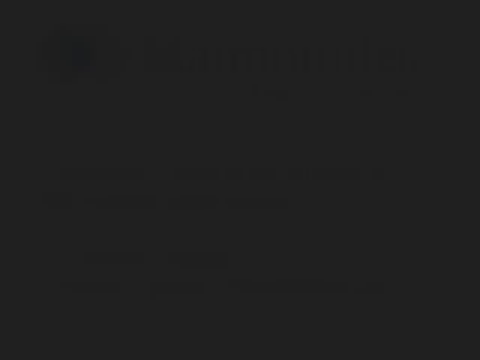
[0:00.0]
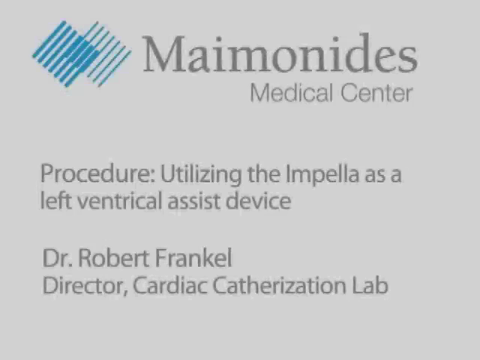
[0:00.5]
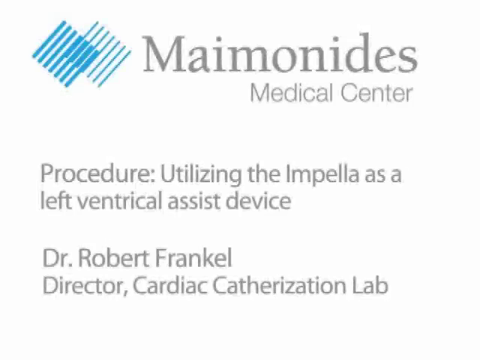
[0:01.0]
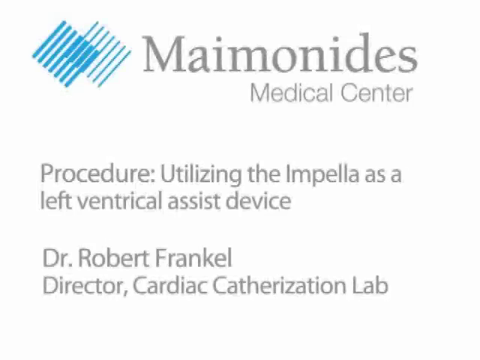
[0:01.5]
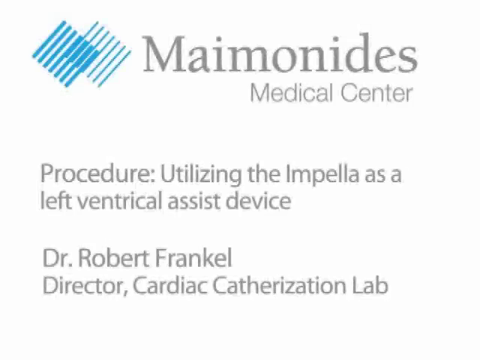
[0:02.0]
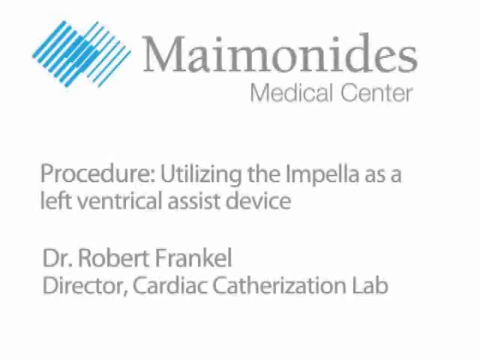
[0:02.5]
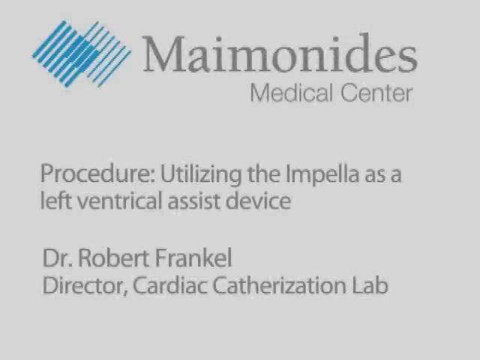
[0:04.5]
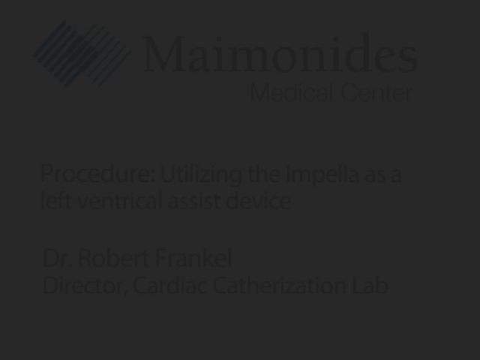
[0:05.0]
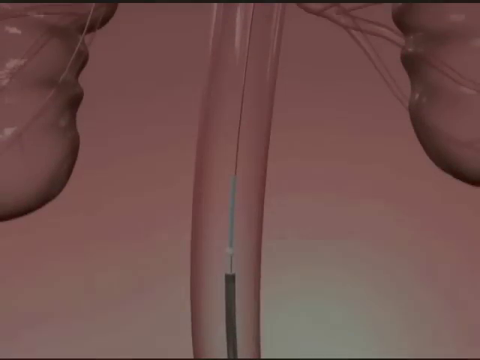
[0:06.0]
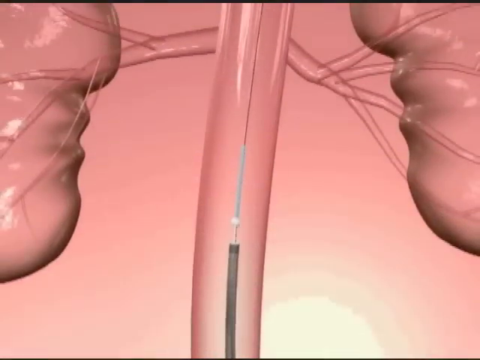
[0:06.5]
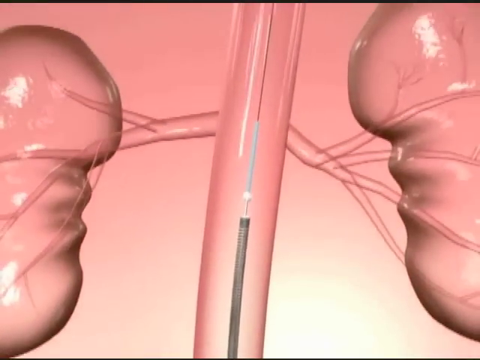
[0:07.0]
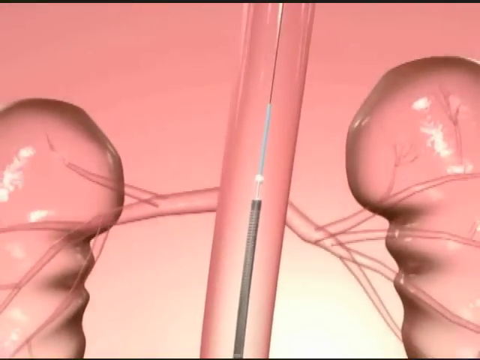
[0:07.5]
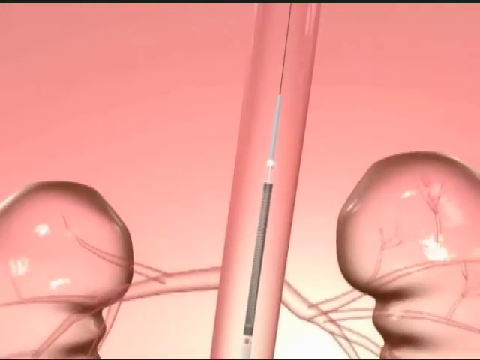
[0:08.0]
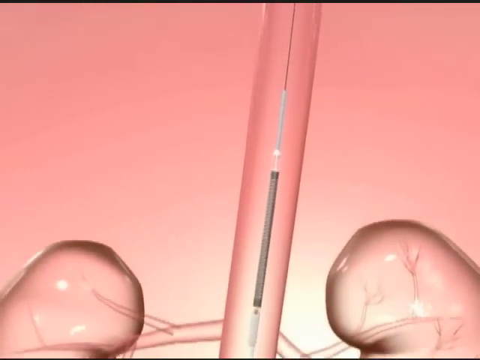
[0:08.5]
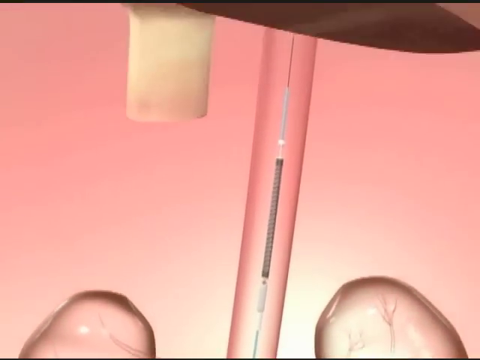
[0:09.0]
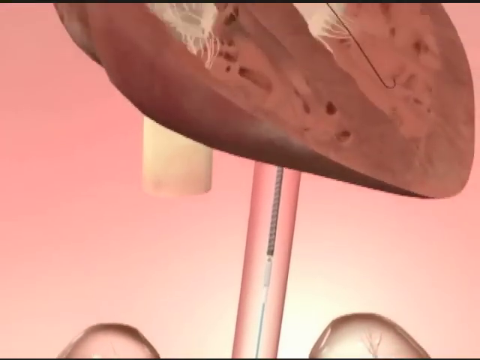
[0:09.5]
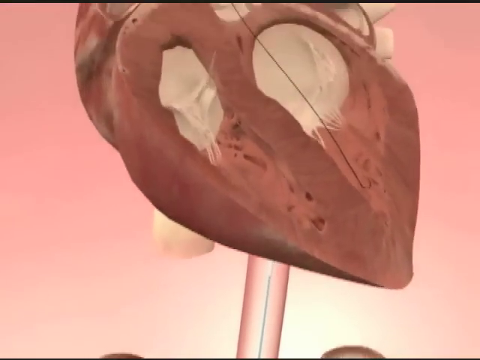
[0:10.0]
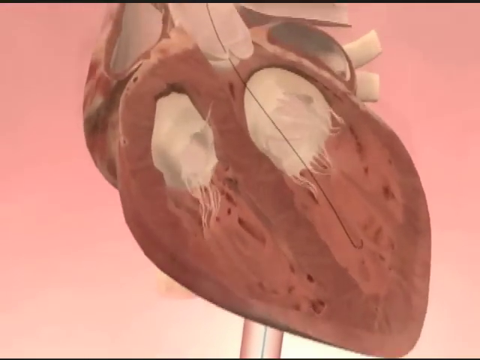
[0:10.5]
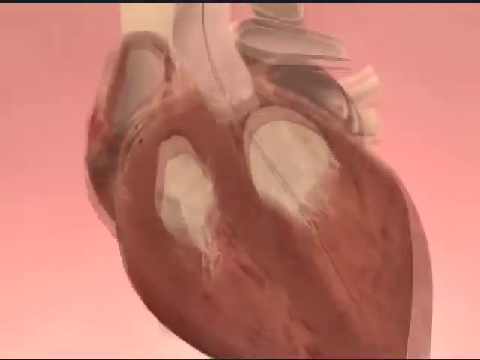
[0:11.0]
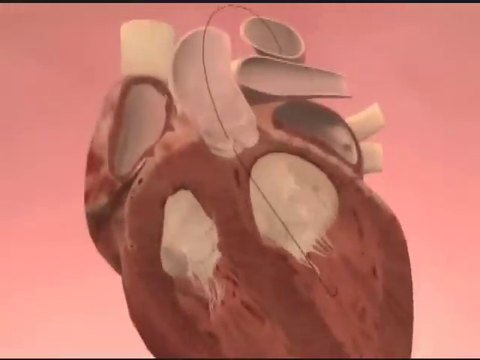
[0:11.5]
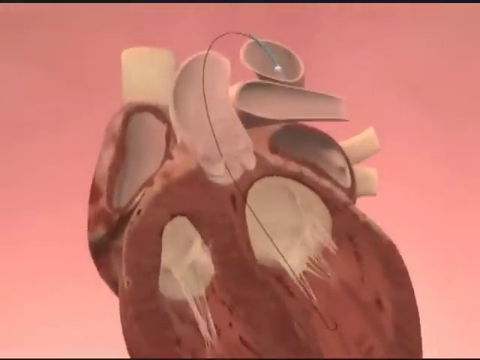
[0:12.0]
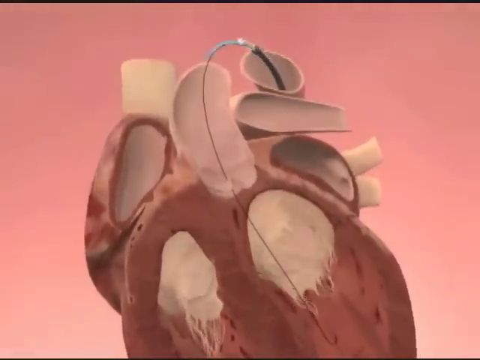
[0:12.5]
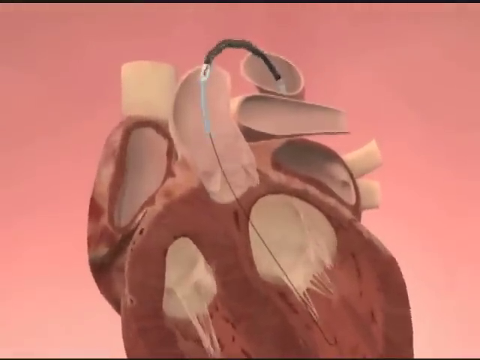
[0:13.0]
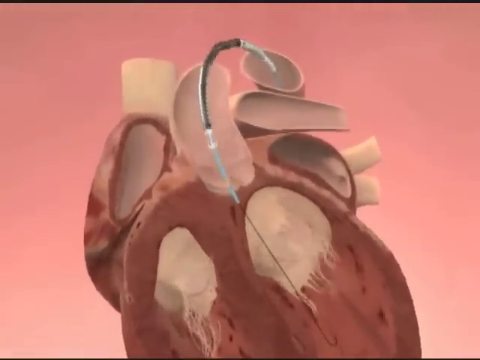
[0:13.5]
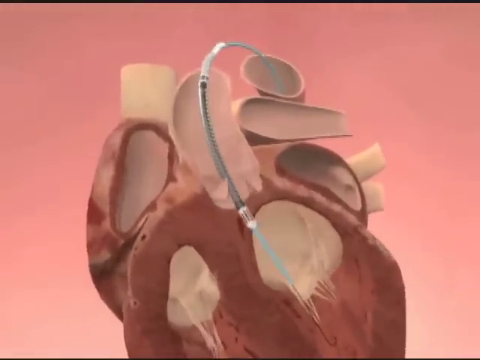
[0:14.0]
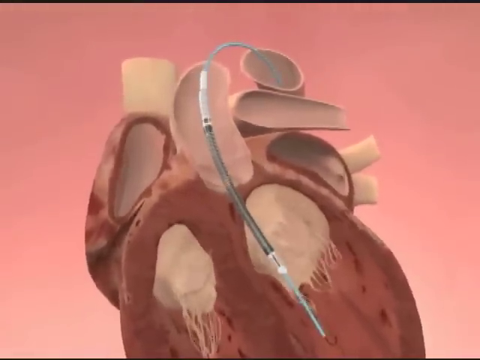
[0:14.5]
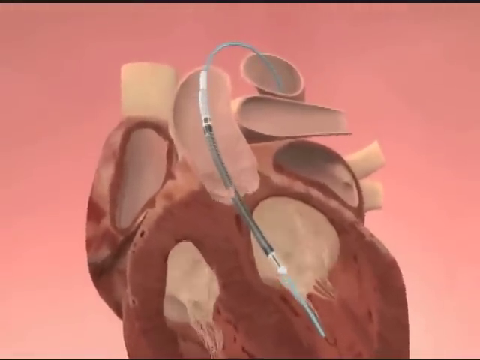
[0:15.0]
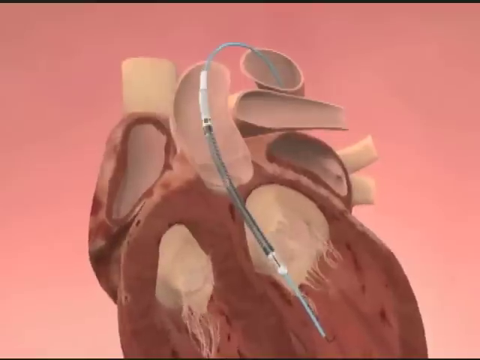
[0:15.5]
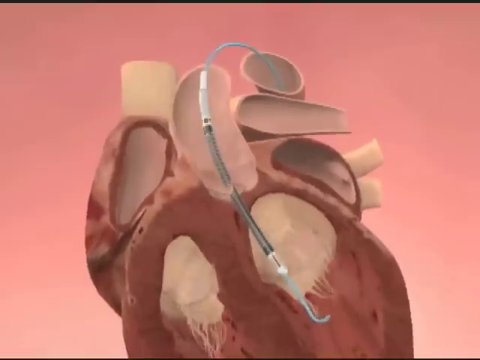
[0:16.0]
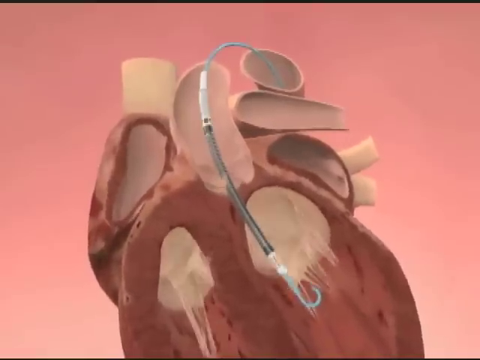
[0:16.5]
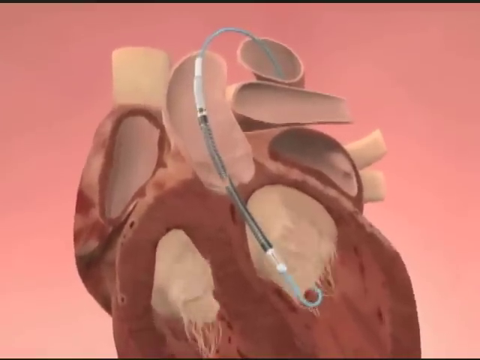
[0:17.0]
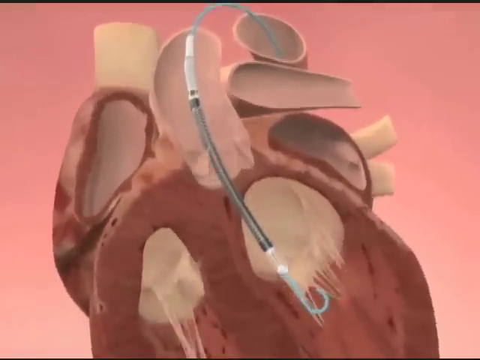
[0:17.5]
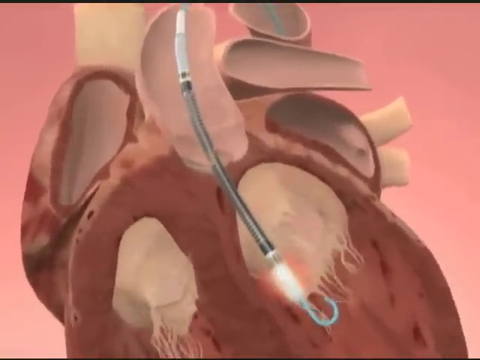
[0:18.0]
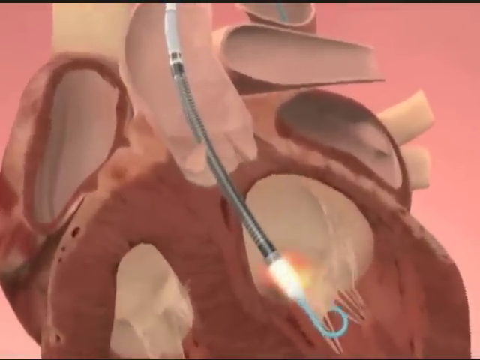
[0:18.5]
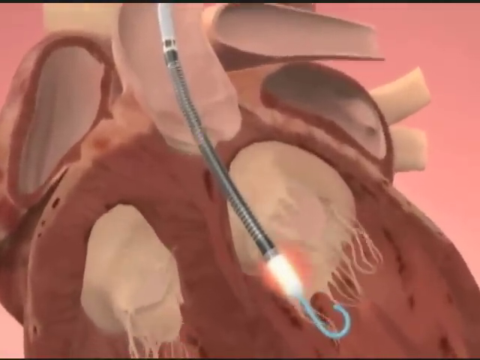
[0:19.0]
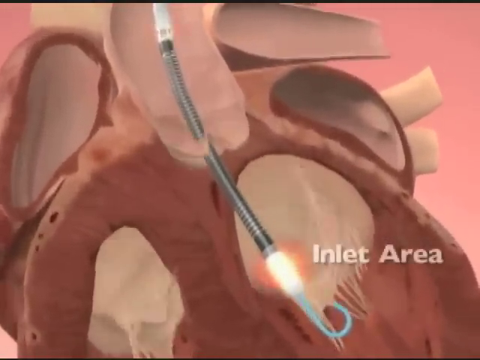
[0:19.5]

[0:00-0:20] The video opens on a black screen as text fades in on a white background. The text reads "May Mondy's Medical Center, procedure utilizing the impella as a left ventricle assist device. Dr. Robert Franco, director, cardiac catheterization lab." To the left of "May Mondy's" is a double blue diamond logo: a sort of square diamond shape made of diagonal lines running from top right to bottom left, with seven lines in each. The first diamond looks a little thicker than the second, and four of their lines, the right four of the front one and the left four of the back one, cross over each other to form four thicker lines that outline another, smaller blue square diamond between them. The screen fades to black, and then a tool is seen going up what appears to be a line toward the heart. In an animation of the beating heart, the tool travels up into the heart, goes in and inserts itself. The front of the tool has a black liquid in it or some sort of black covering. The view sort of zooms in, showing a little hook that starts glowing where it connects with the black area.